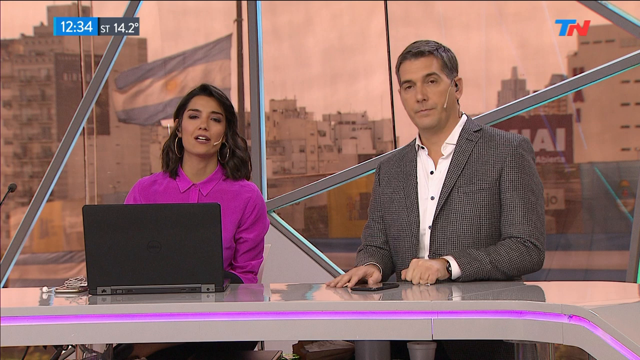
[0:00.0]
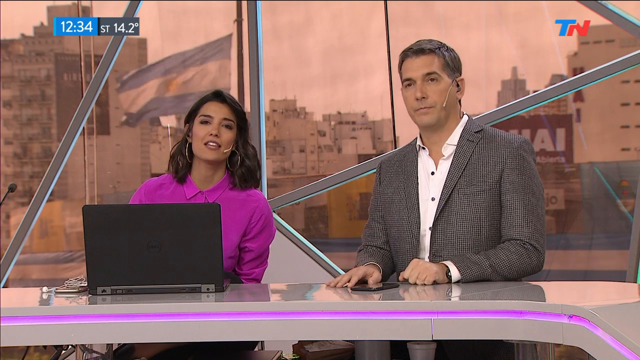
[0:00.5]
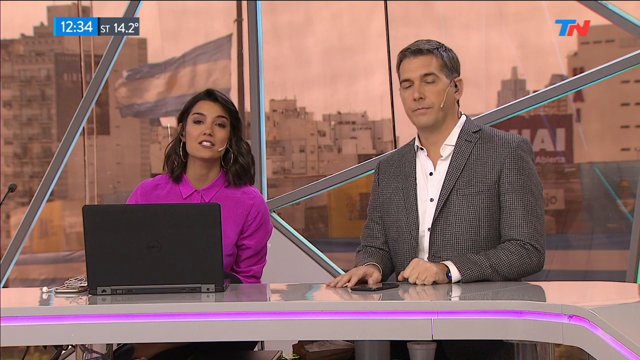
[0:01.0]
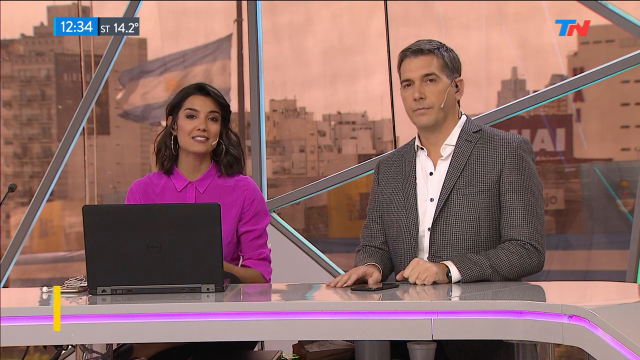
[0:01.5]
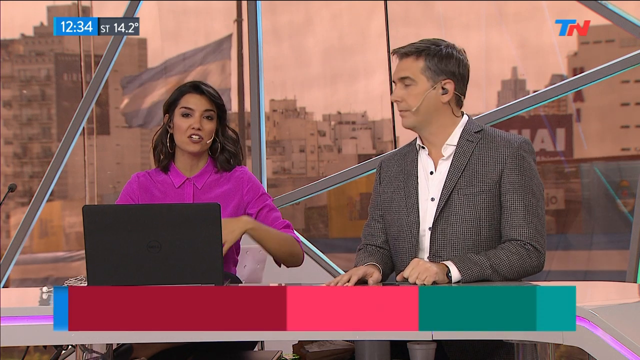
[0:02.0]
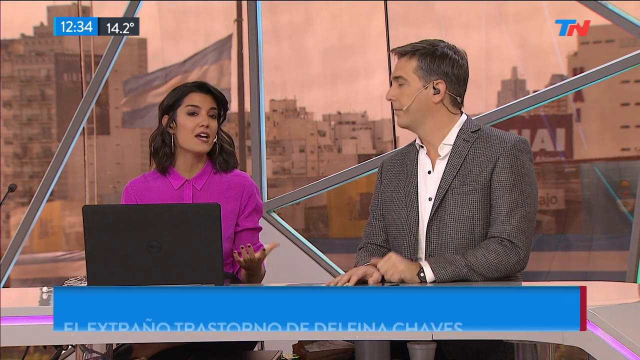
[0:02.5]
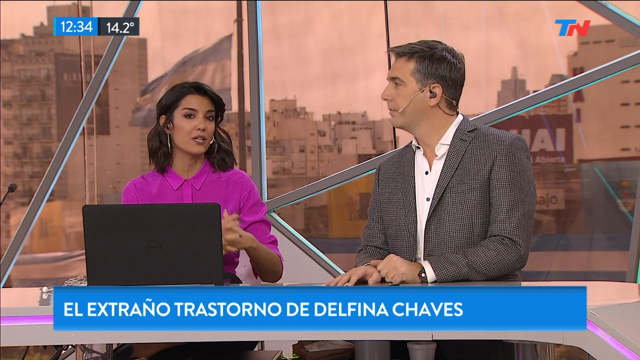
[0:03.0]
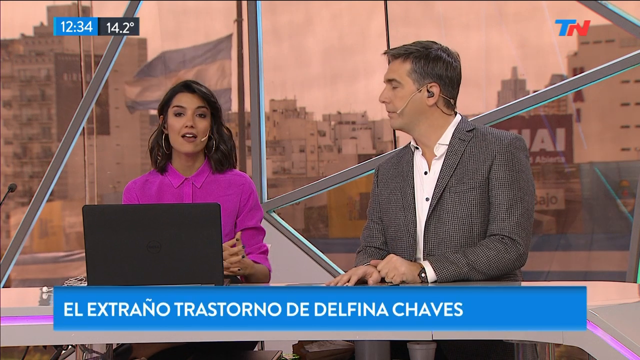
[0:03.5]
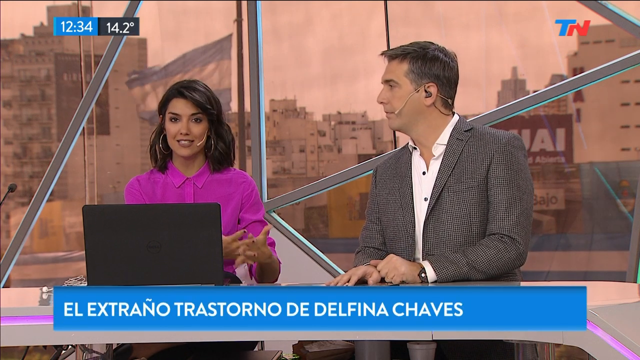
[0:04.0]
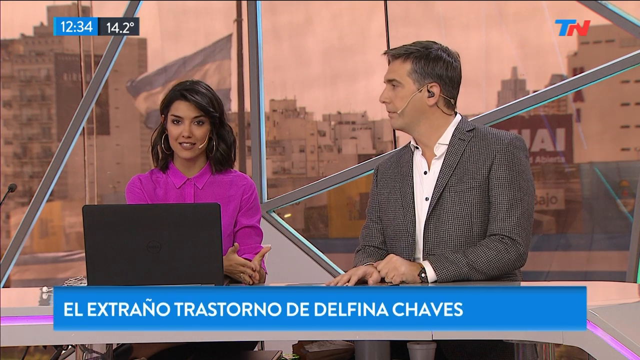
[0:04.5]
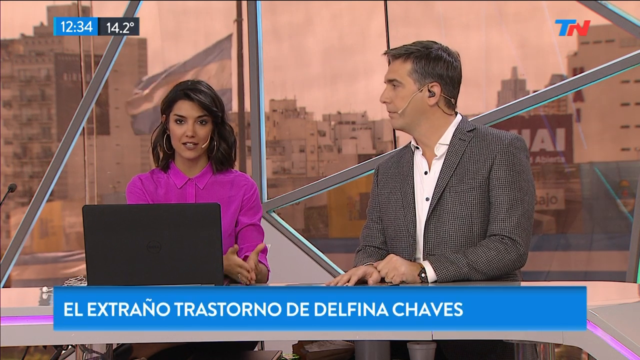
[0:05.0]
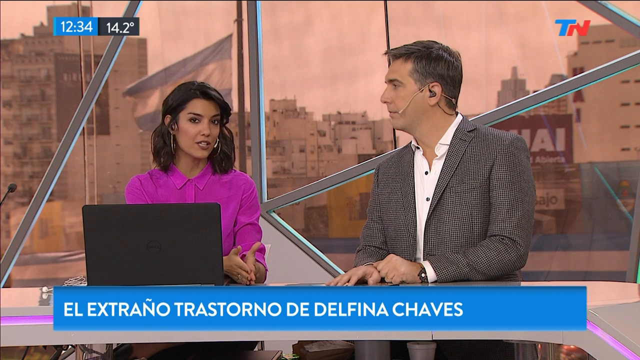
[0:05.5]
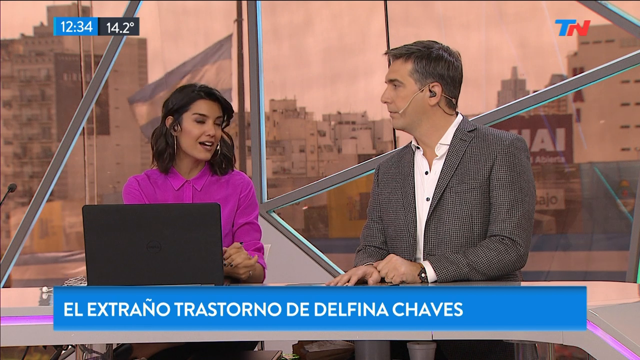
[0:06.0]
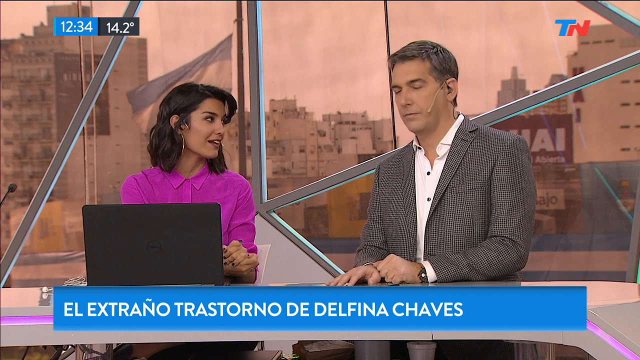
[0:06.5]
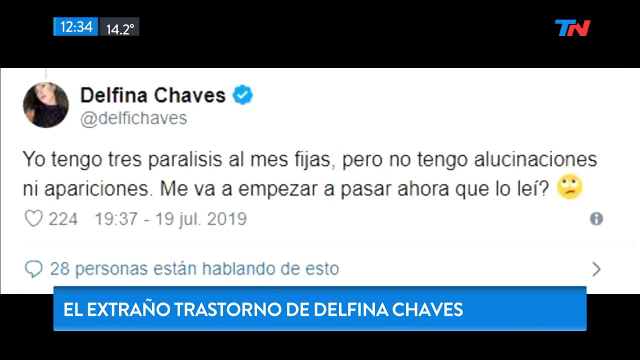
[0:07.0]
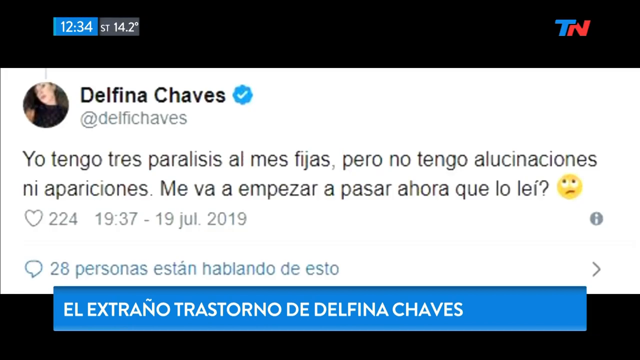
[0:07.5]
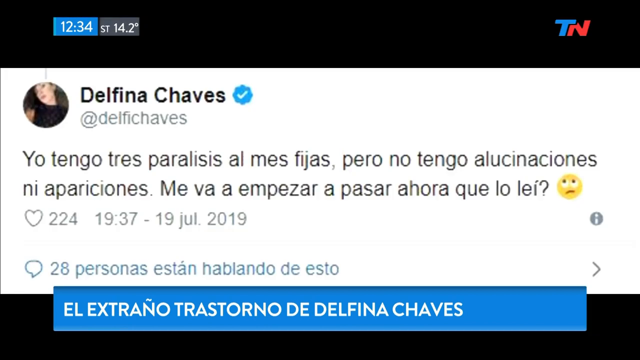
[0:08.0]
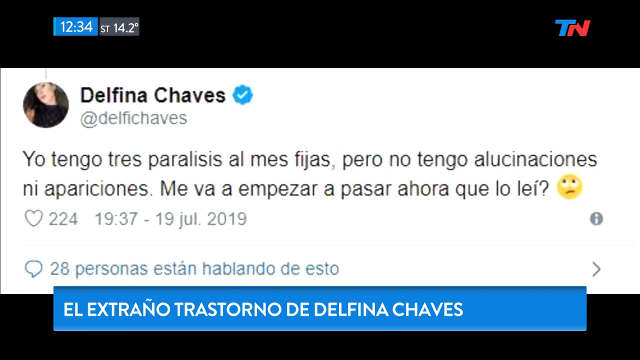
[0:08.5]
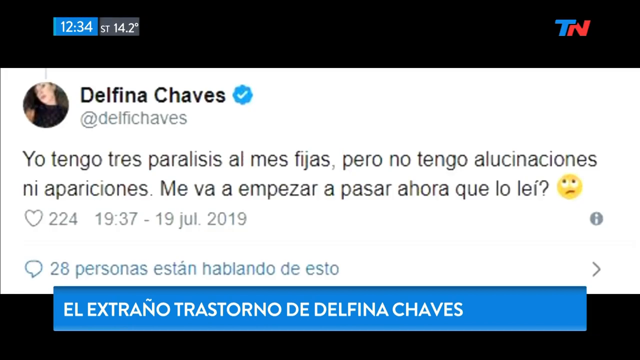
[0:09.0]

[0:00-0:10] Two people, a woman and a man, talk with microphones at their faces while looking at the camera. An alert from a Twitter handle appears on screen, apparently written in a language other than English. Behind them are buildings with a brown colouring; the setting seems to be an old town, and a national flag flies high. The time shown is 12.34. The woman has a laptop in front of her, while the man has nothing in front of him; he wears a timepiece and holds his hands together. Around them, the town shows little to no movement.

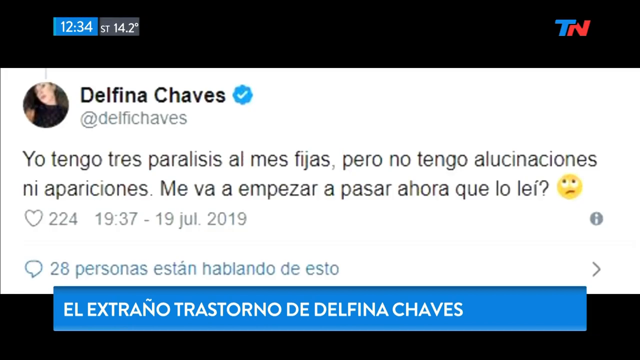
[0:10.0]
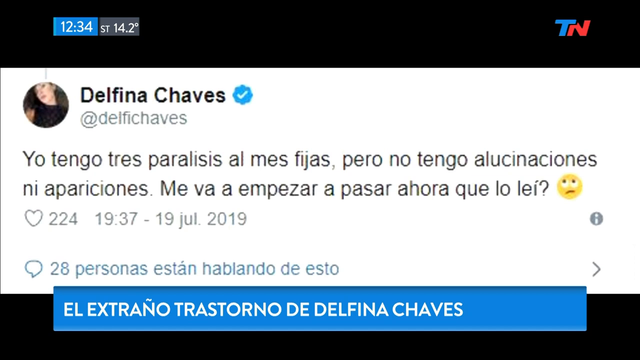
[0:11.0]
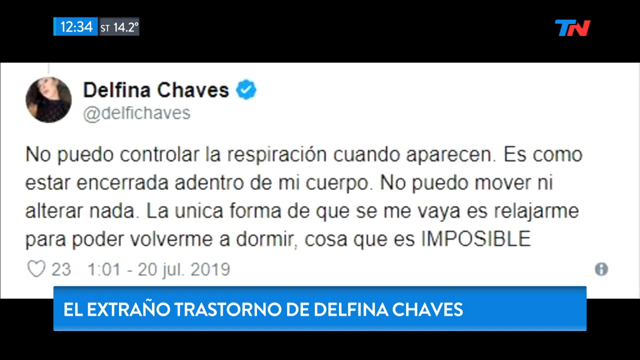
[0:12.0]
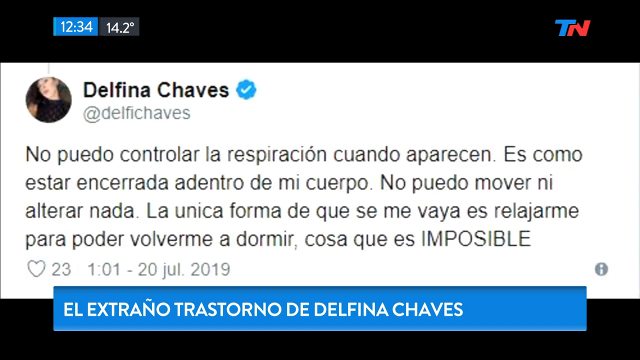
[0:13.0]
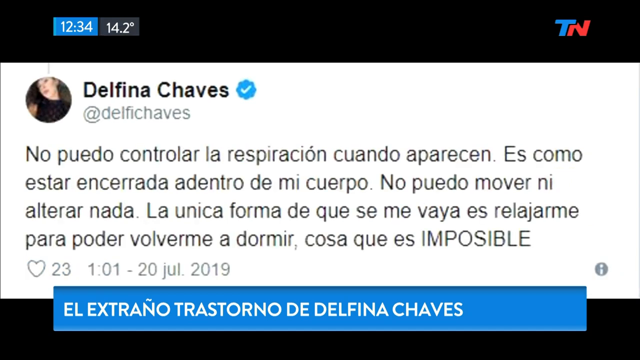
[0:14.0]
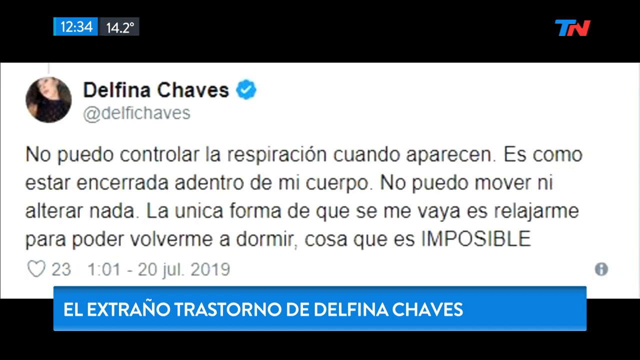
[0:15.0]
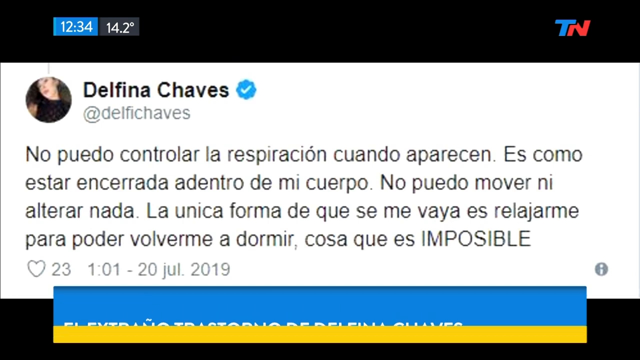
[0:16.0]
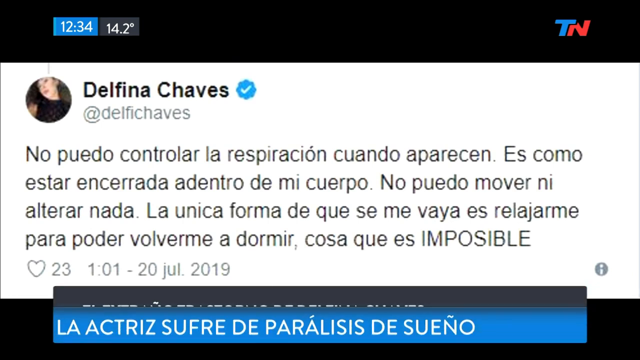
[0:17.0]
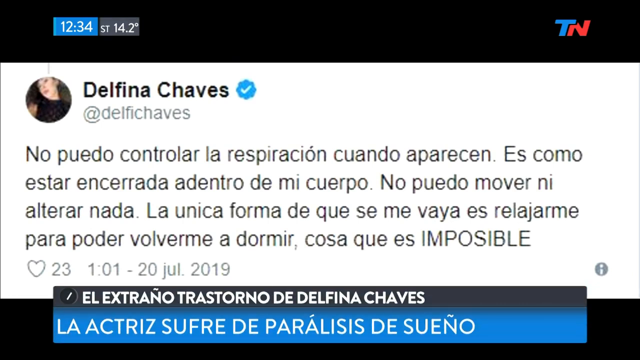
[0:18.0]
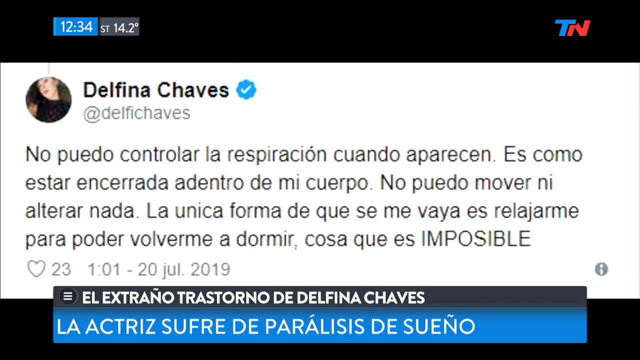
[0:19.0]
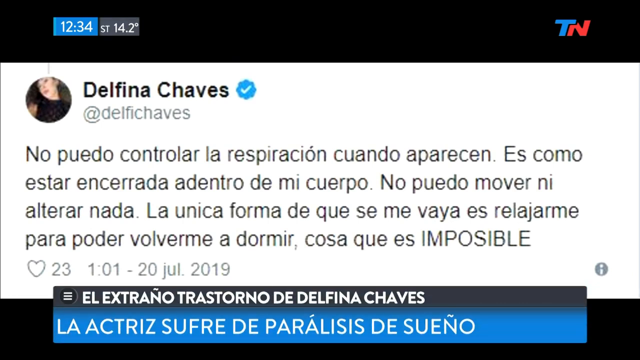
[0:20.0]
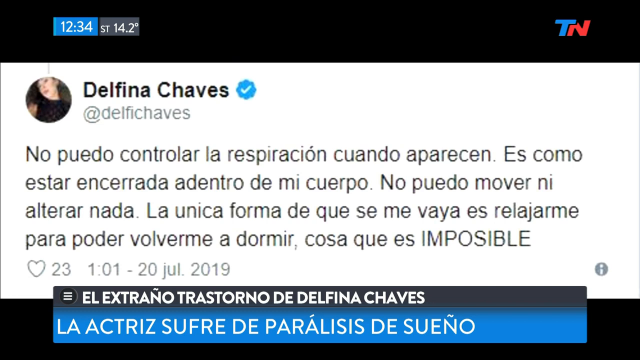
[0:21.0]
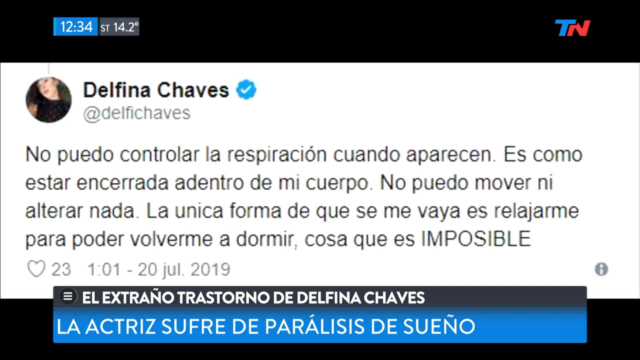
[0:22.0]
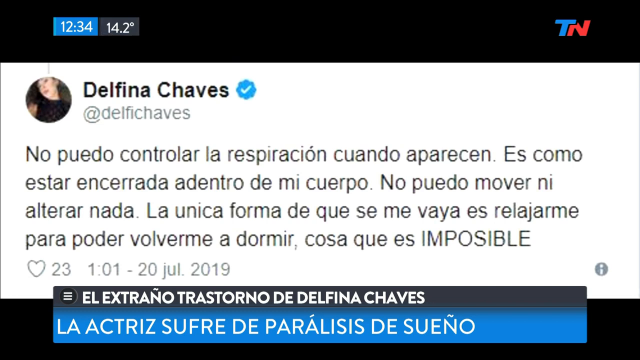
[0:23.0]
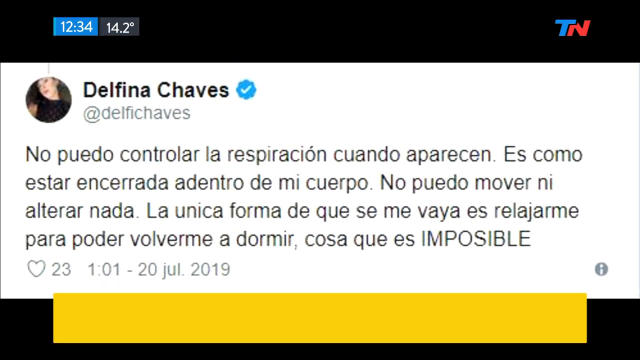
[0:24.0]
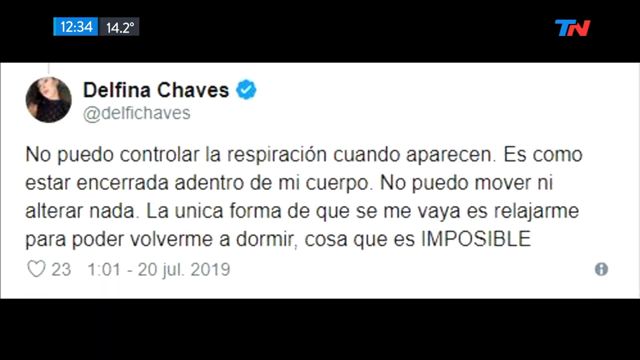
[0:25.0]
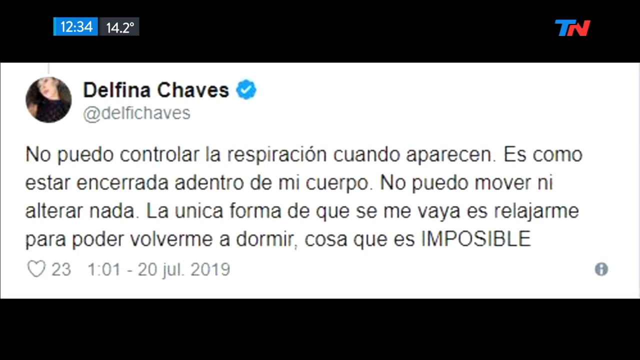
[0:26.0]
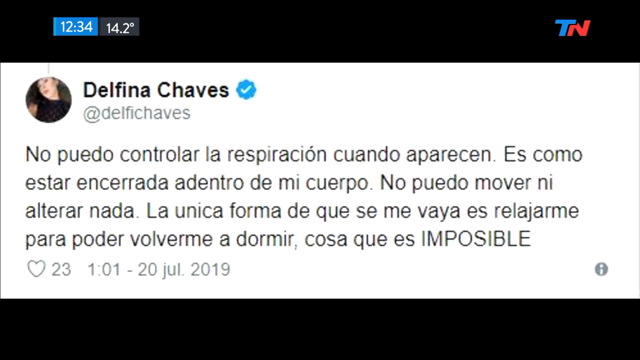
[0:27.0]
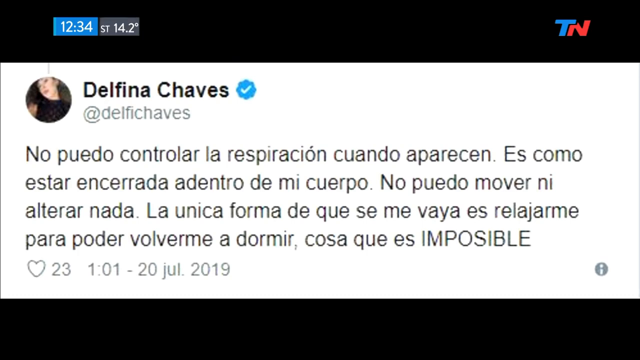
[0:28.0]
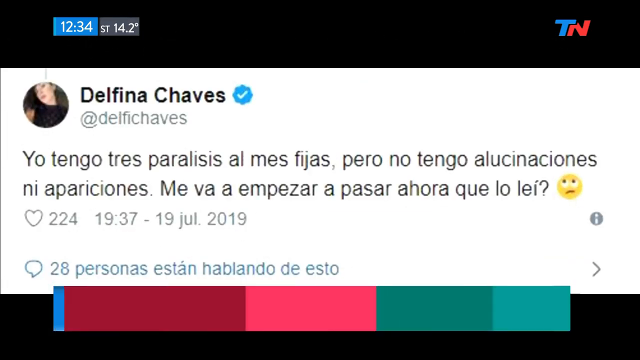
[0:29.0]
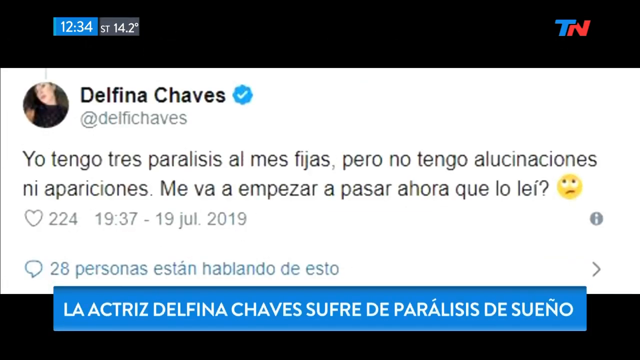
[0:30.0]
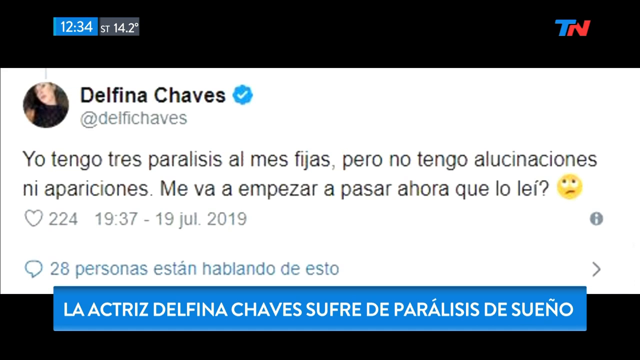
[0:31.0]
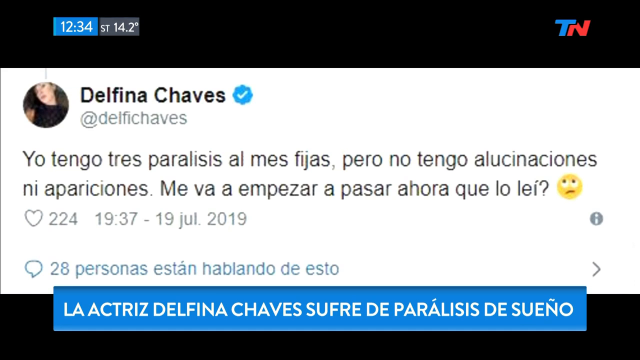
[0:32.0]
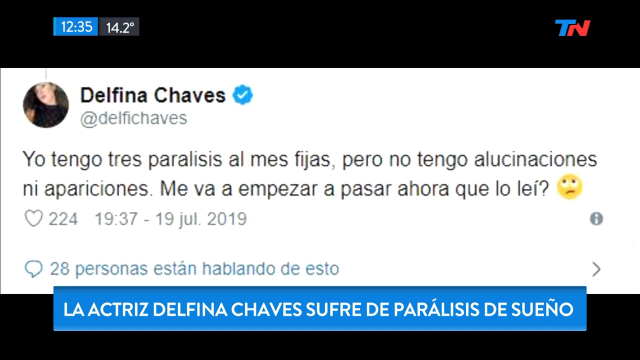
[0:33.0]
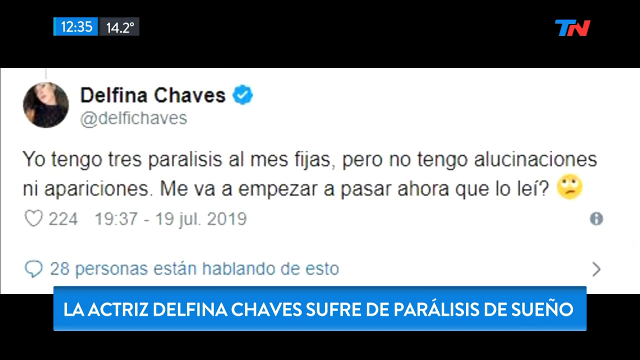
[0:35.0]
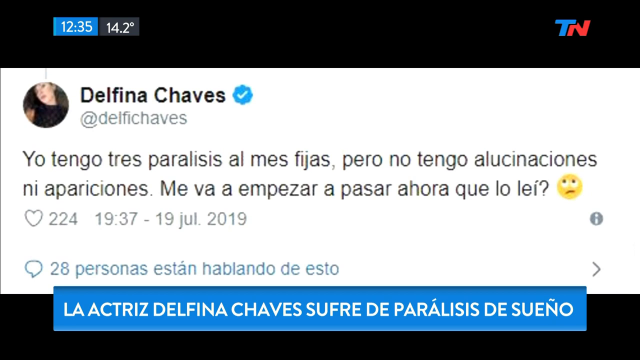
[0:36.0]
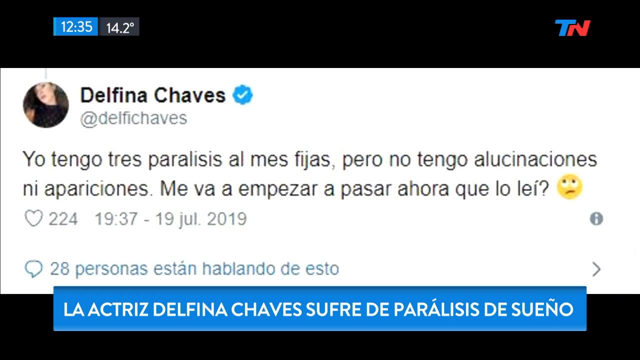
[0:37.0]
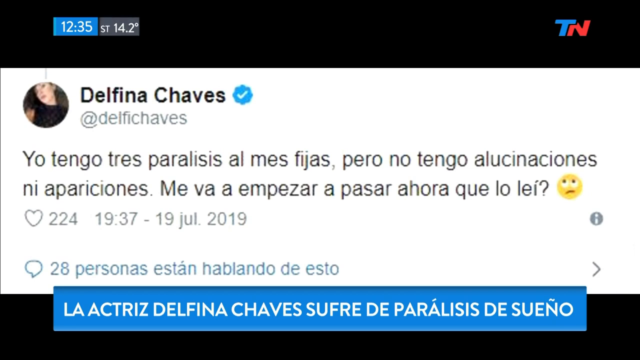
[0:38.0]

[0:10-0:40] A Twitter post from the account Delfina appears, apparently a comment on the story. The text and the headlines are not in English. An emoji seems to show a confused person, possibly rolling their eyes, with a confused mouth, and the commenter seems unhappy and confused.